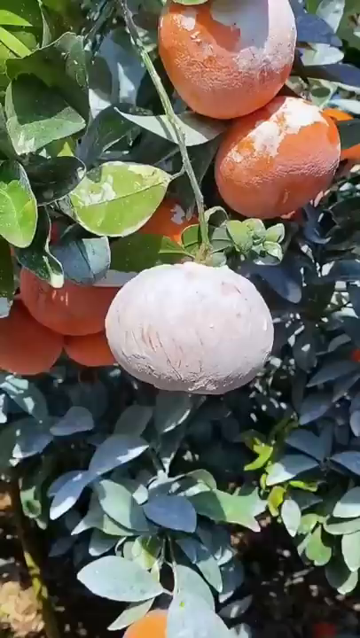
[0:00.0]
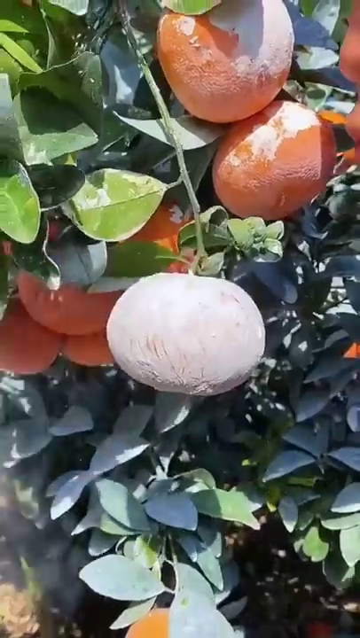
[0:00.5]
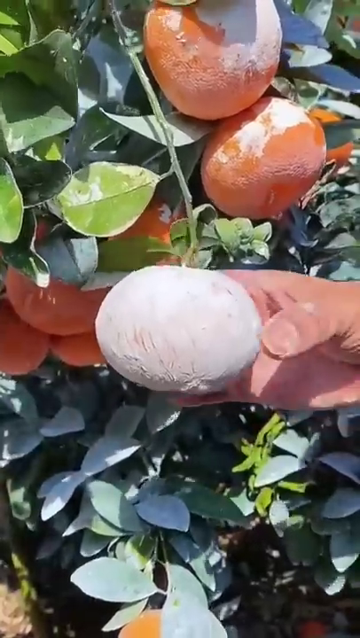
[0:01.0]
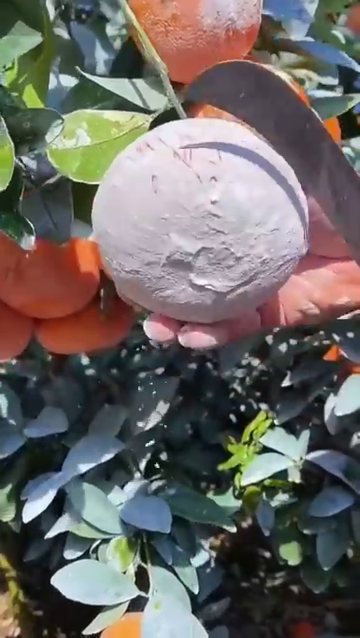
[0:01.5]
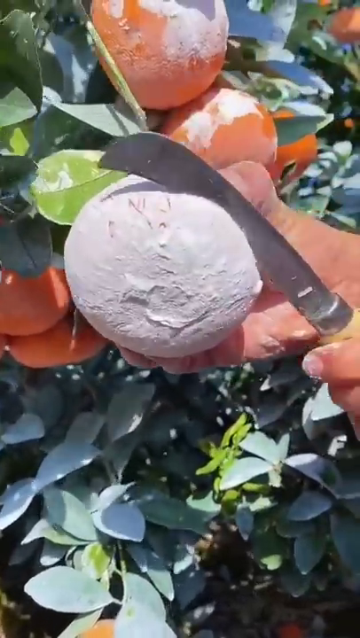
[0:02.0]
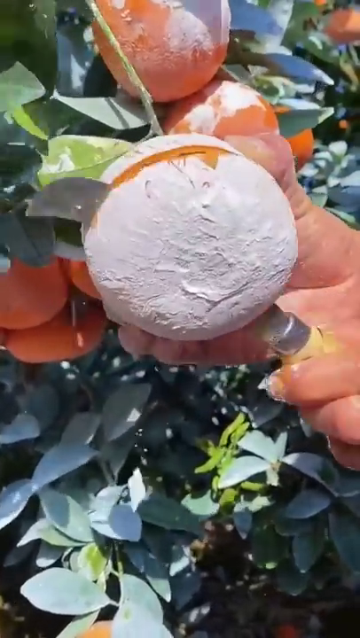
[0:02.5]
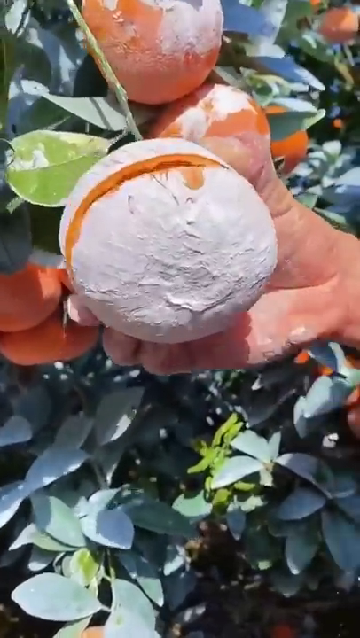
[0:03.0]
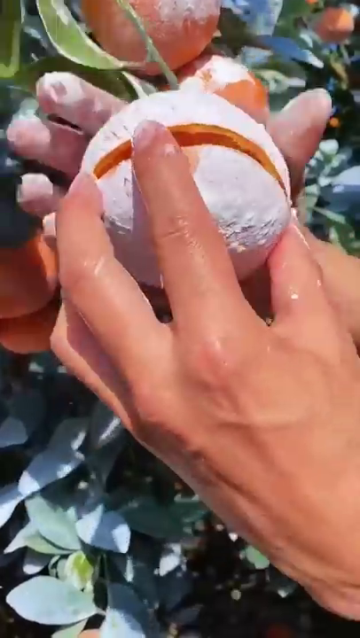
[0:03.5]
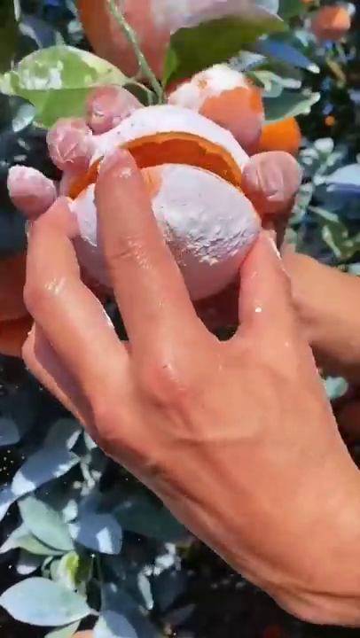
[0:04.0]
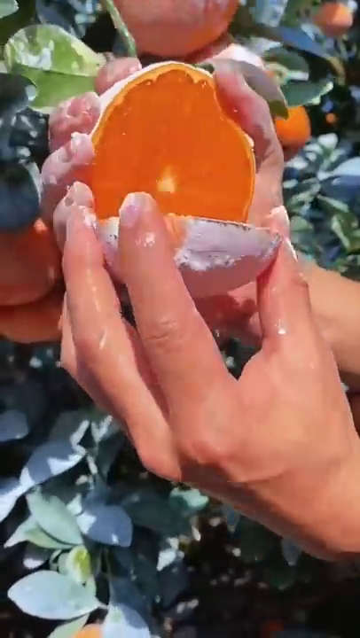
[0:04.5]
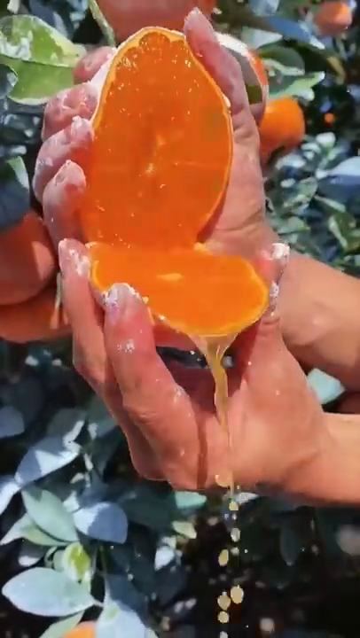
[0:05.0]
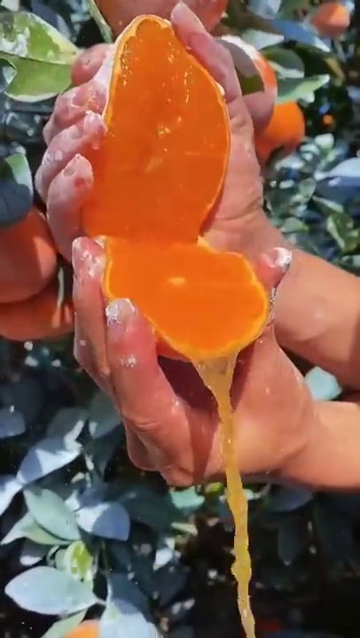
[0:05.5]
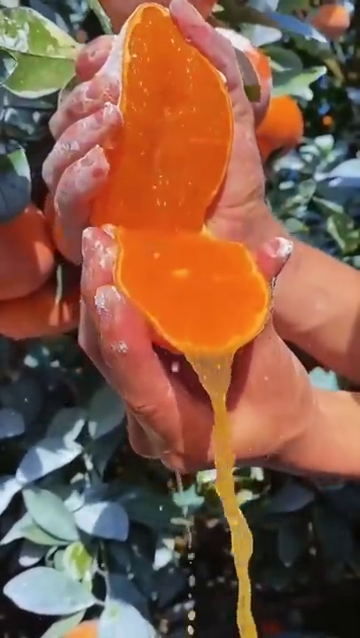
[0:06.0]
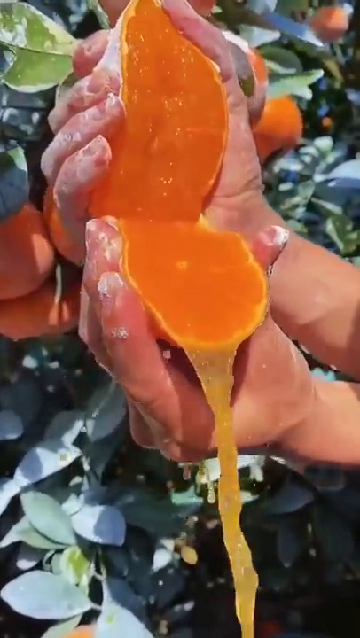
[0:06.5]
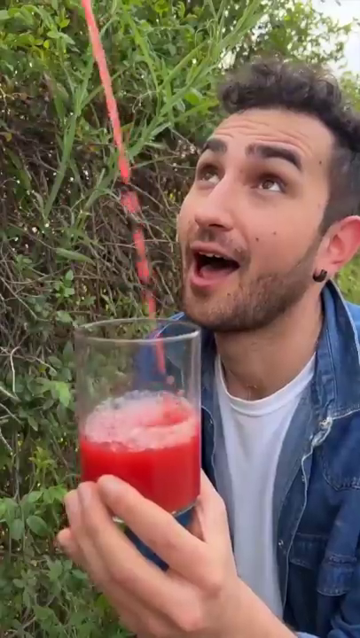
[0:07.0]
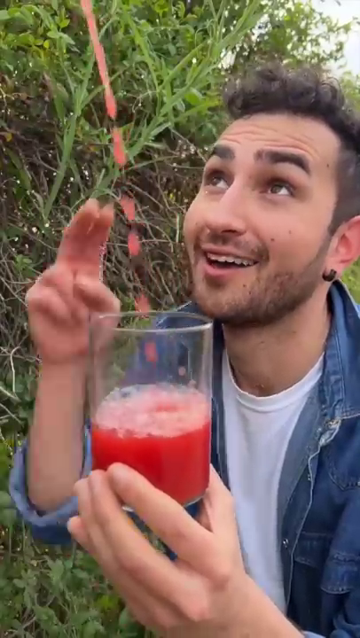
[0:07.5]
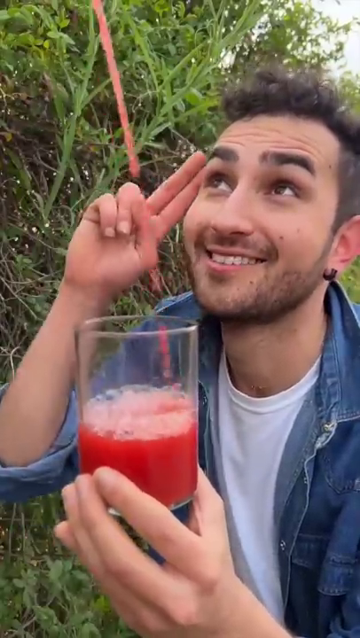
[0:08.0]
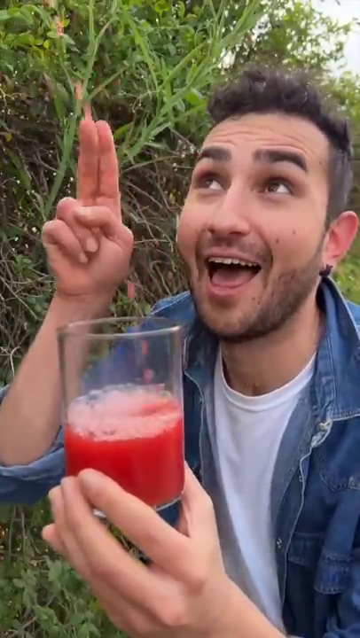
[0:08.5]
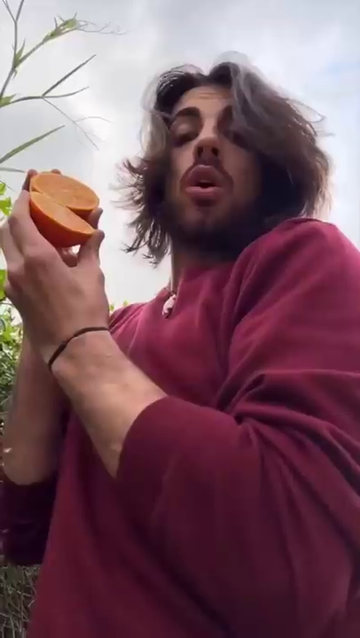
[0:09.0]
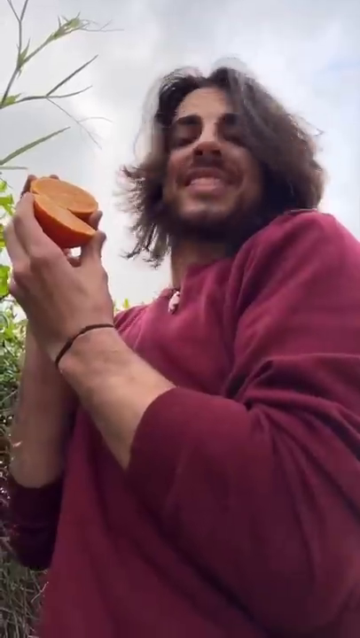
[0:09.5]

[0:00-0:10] A powdered white fruit hangs off a green vine, with green leaves behind the vine and sunshine beaming off the fruit. A white person's hand reaches in from the right side and grabs it, the thumb visible. The person turns the fruit on its side and pulls a metal blade, which appears to have a brown handle, over the top to cut it in half. He then opens the fruit from the middle, revealing that it is orange inside, and as he opens and squeezes it, orange juice flows downwards. The juice lands in the cup of another white man, a clear glass cup, but it's red. This man has short brown hair and looks up; he wears a jean shirt with a white t-shirt underneath, and green branches are visible just behind him. He motions with his two index fingers toward his temple, then gives a salute sign and a happy face to whoever is up there as the juice pours into his cup. The next scene shows another man holding that same orange; he has long brown hair, a reddish top, and a black band around his wrist. At the top right is a blue circle with what looks like an image of two guys jumping in the air, and a caption in white lettering reads "most perfect orange?" A surprised face is also shown, with text beside it reading "at shorts".